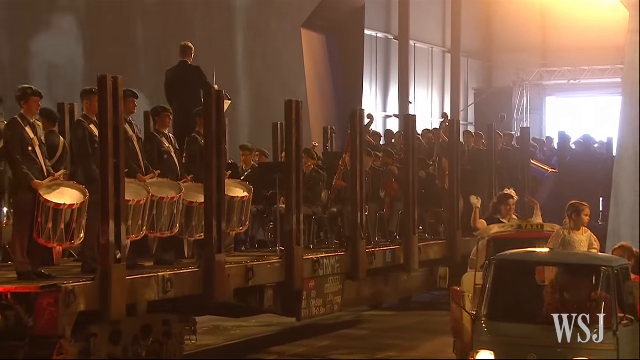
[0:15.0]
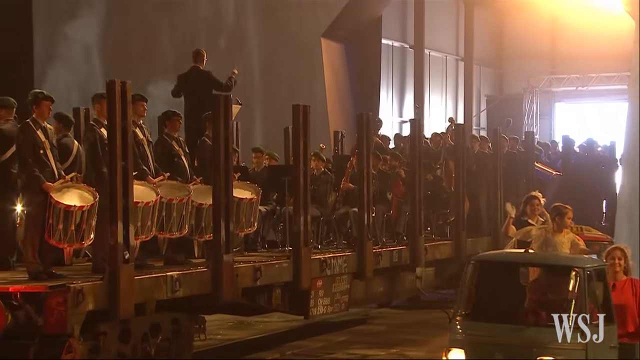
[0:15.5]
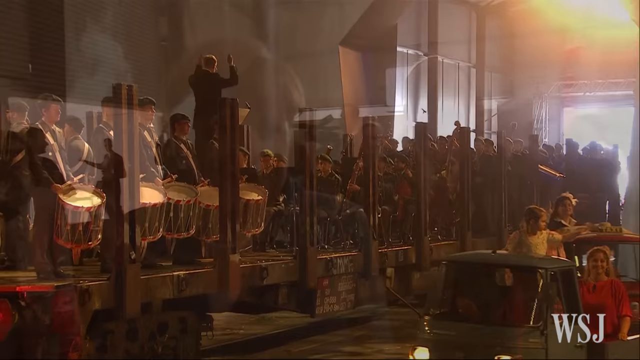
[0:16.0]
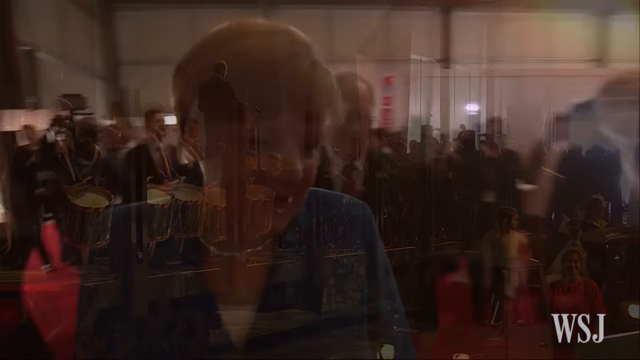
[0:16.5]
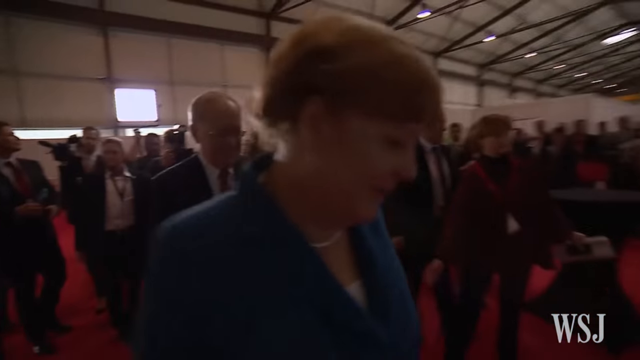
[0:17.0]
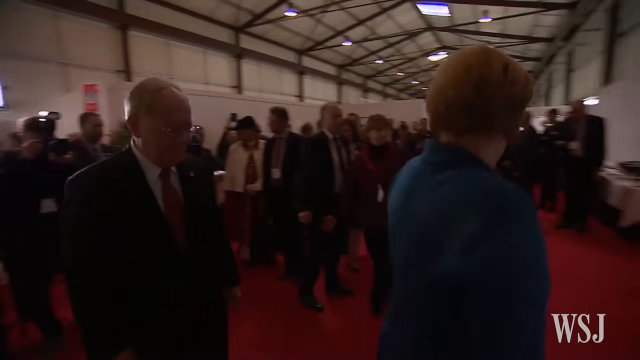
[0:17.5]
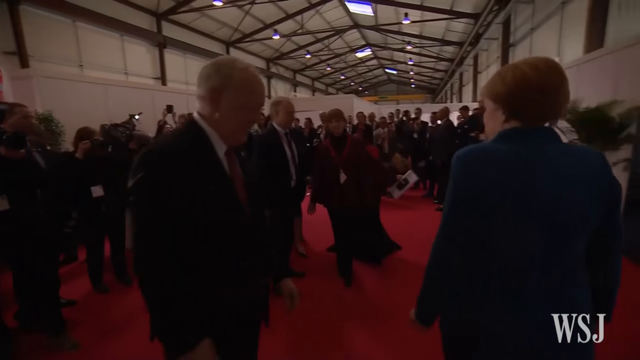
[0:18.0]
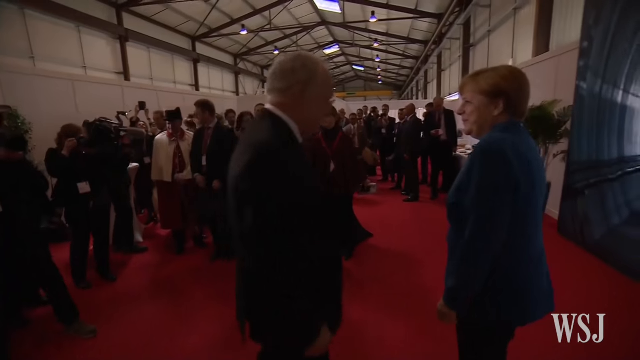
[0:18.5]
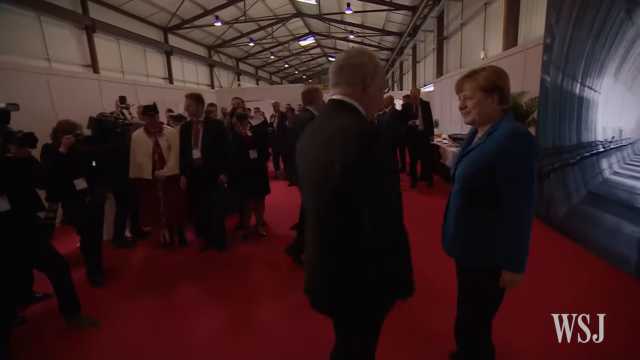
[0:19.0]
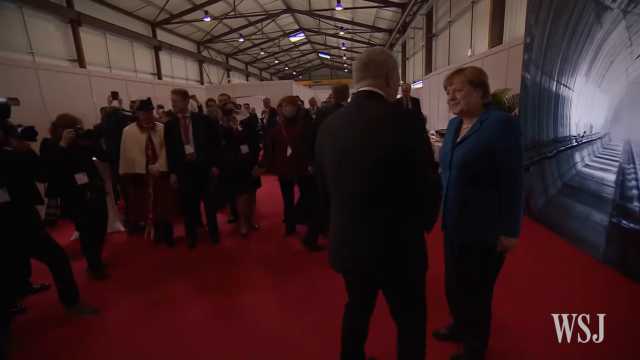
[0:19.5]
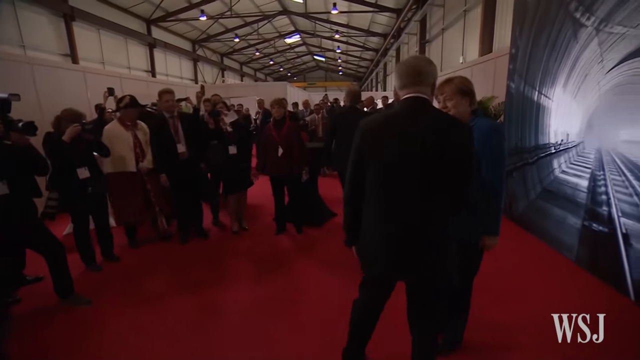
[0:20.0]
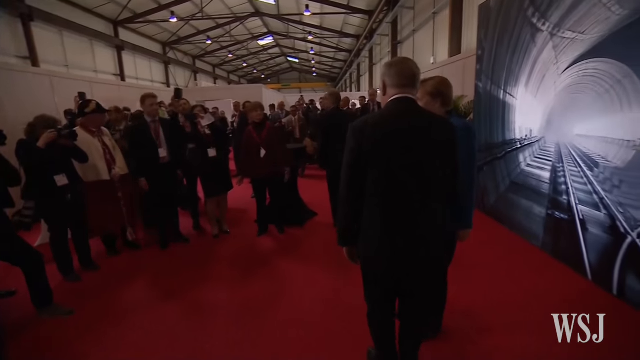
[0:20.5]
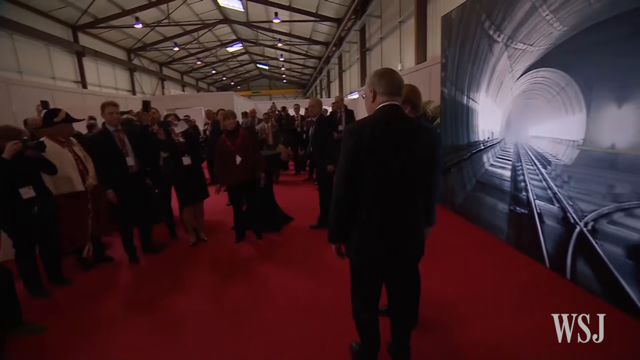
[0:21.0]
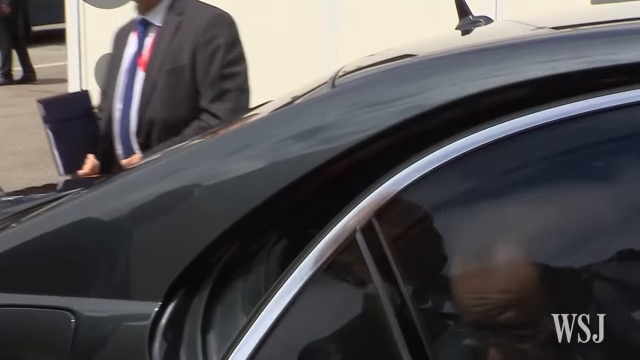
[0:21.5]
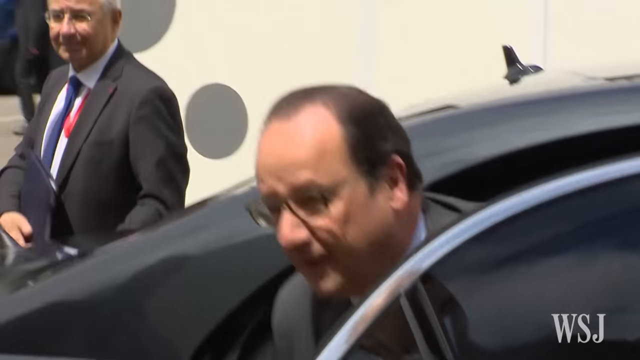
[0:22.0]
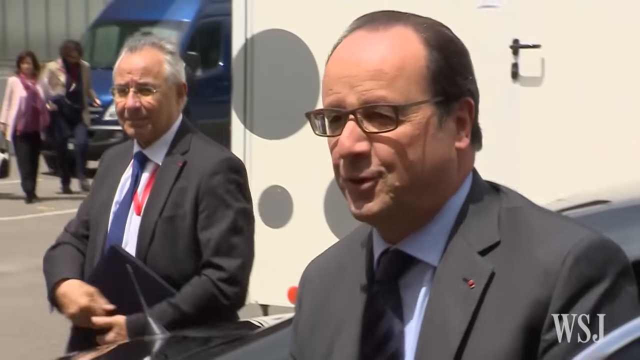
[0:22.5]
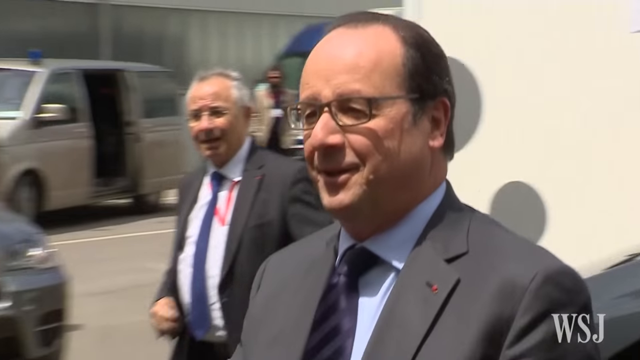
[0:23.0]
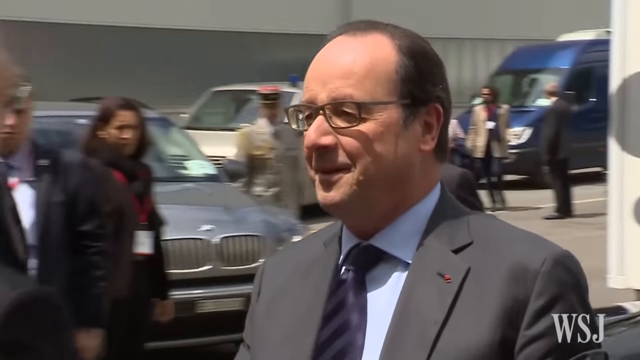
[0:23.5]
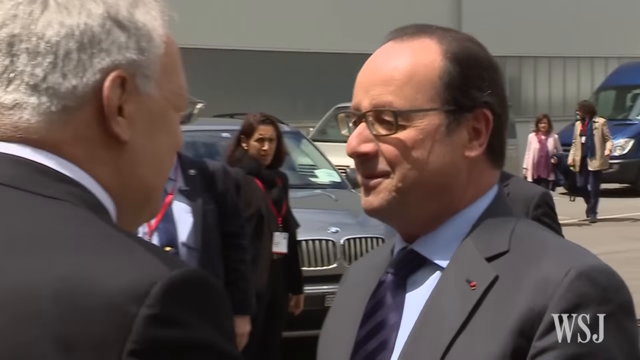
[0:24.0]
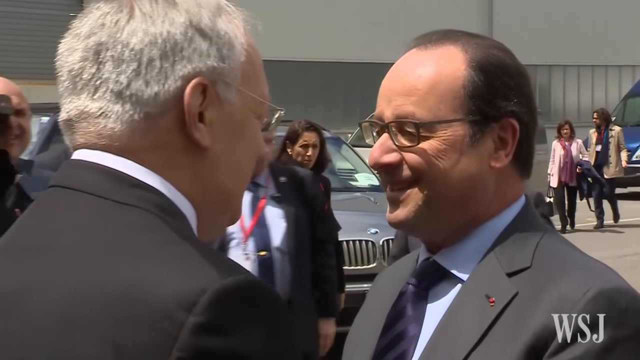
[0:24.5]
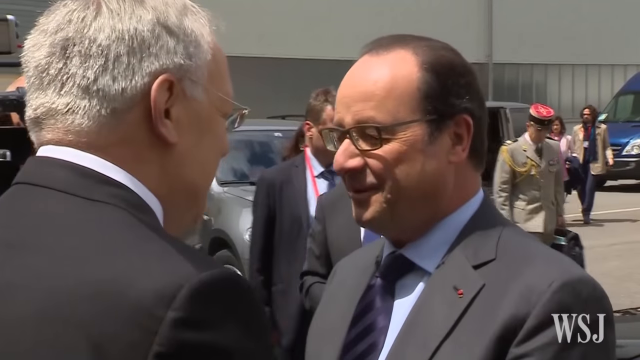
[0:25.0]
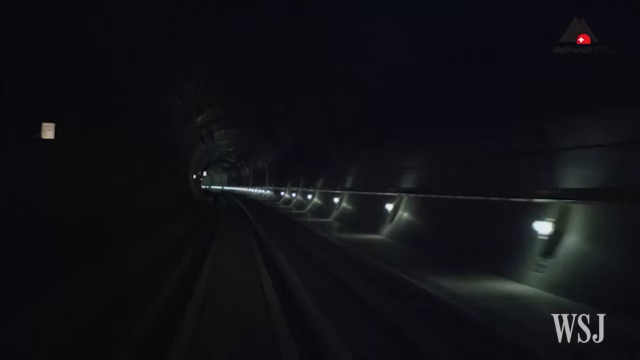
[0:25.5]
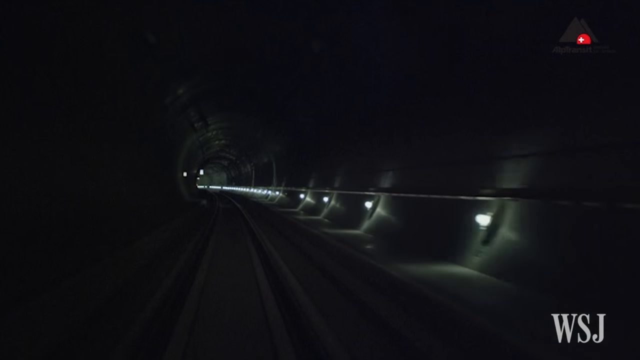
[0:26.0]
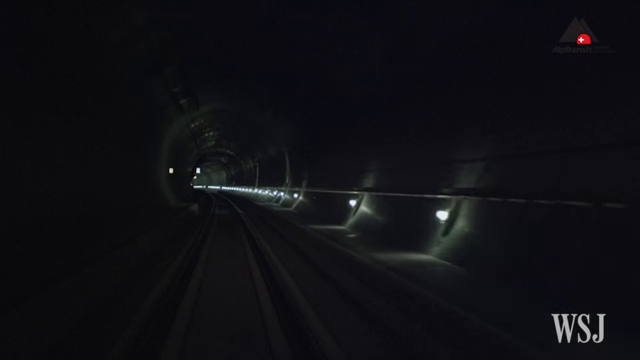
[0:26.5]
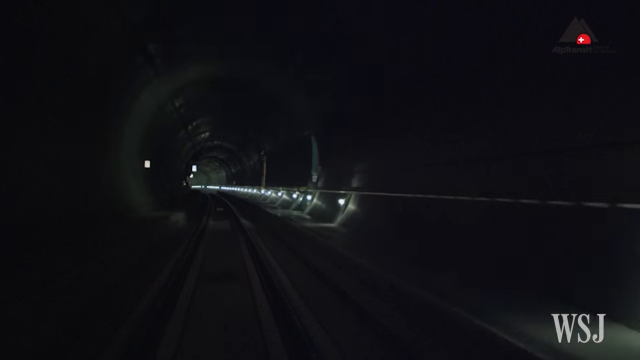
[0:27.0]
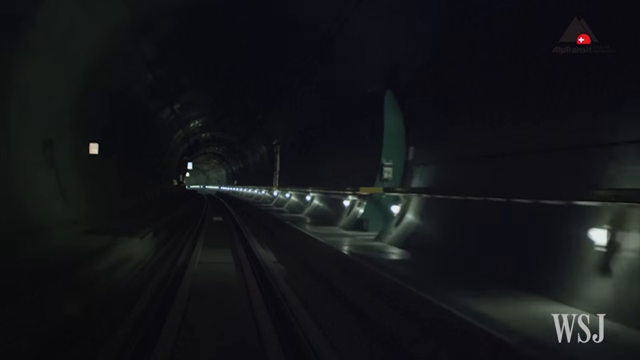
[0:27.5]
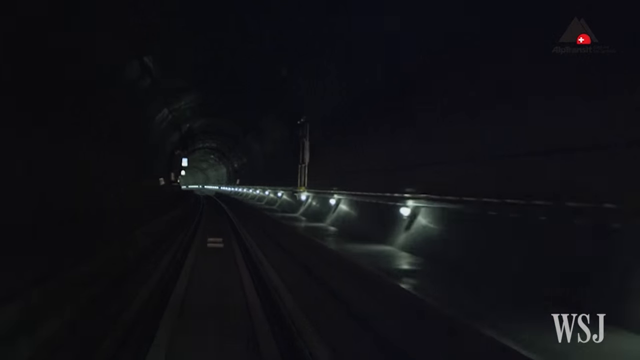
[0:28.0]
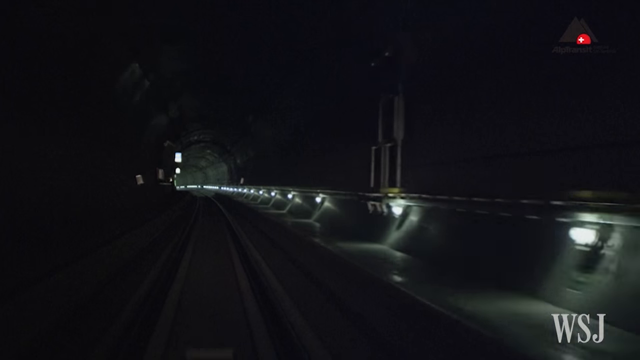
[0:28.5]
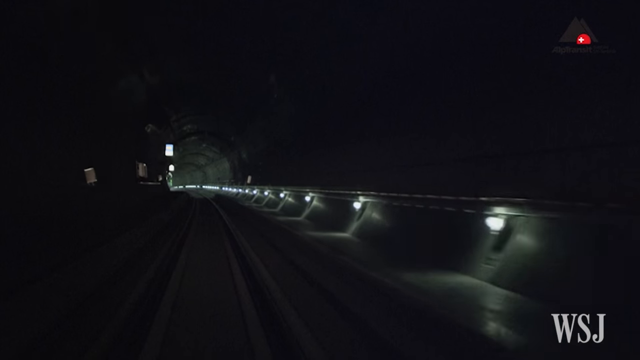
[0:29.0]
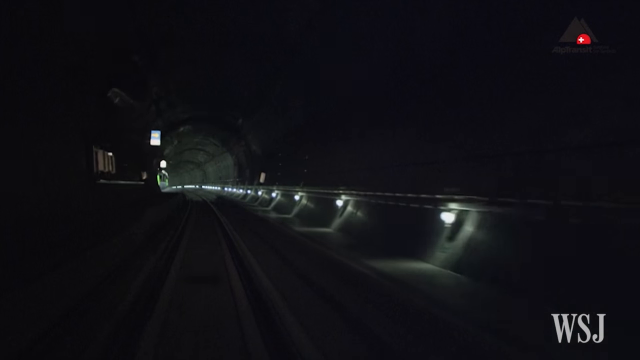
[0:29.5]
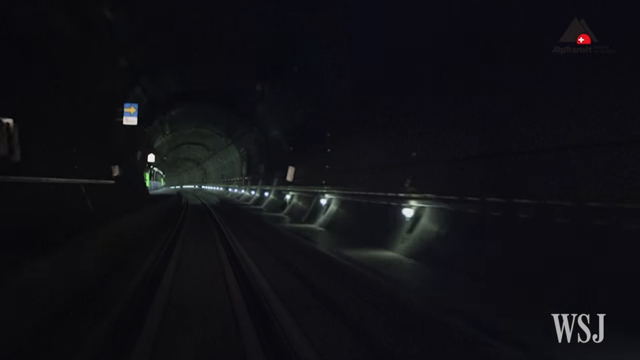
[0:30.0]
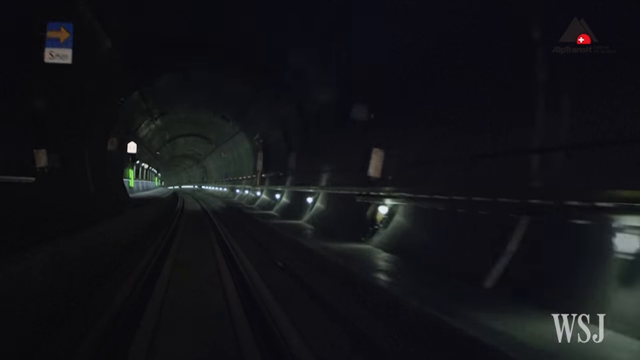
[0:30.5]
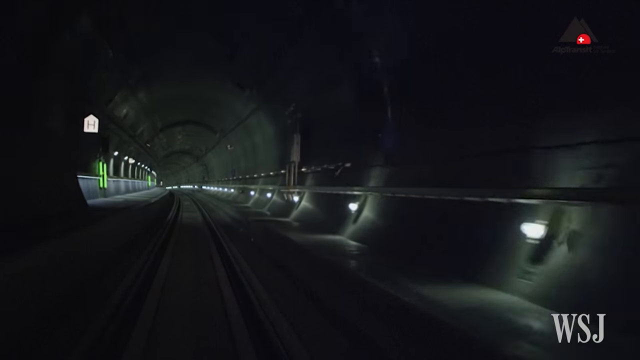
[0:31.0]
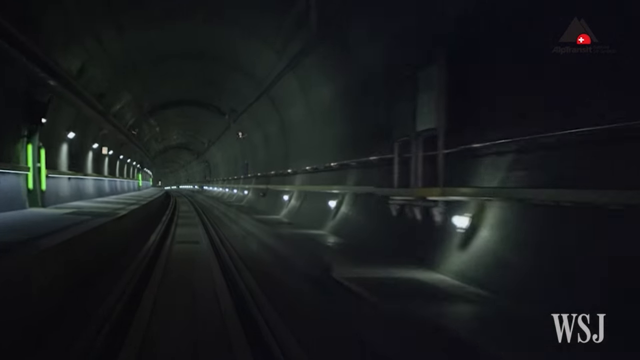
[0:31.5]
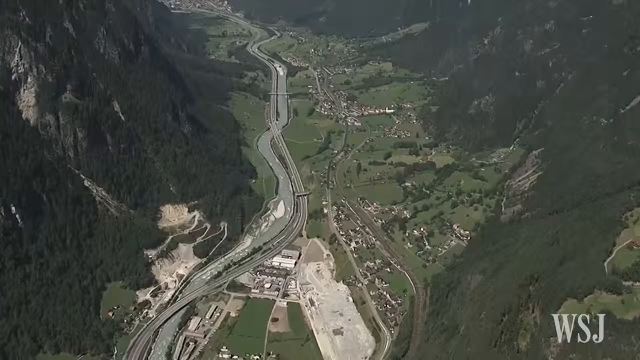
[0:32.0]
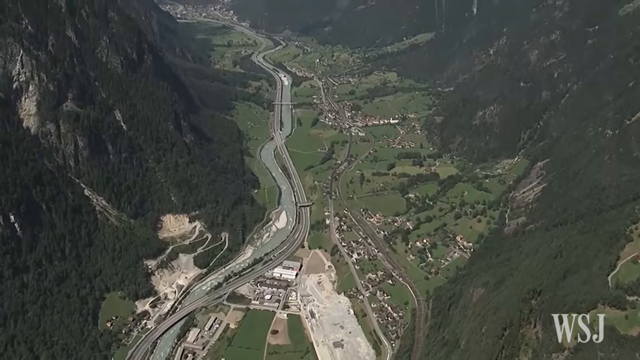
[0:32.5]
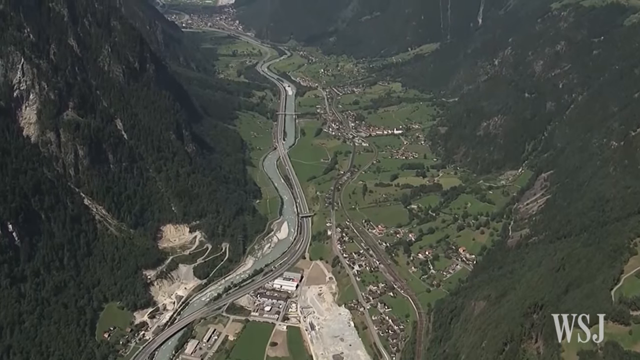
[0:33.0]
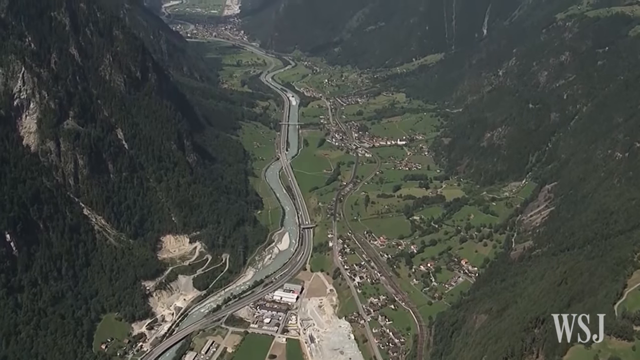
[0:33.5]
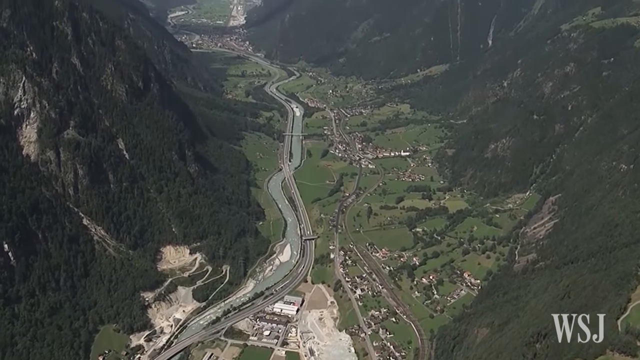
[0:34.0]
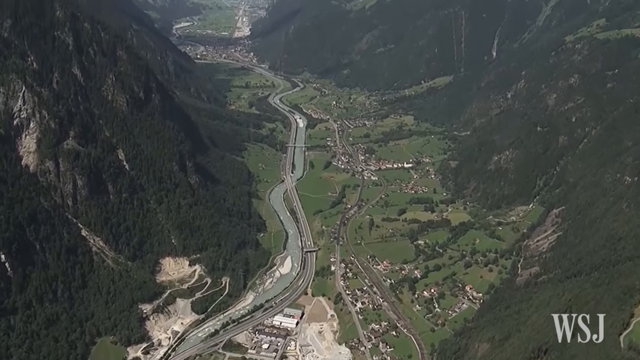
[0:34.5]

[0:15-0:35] The marching band and the costumed people riding on the rides appear, and then the scene moves to an area with people dressed up, something like a big hall, with many people in business wear. There are cameras, and people are shaking hands, a woman and a man. A man gets out of a car and shakes hands with an older man. The view then zooms very fast through a dark tunnel, as if from inside the train; the tunnel looks almost fake, like something from a video game. This is followed by a big panoramic view outside, apparently of a valley with a town down below.